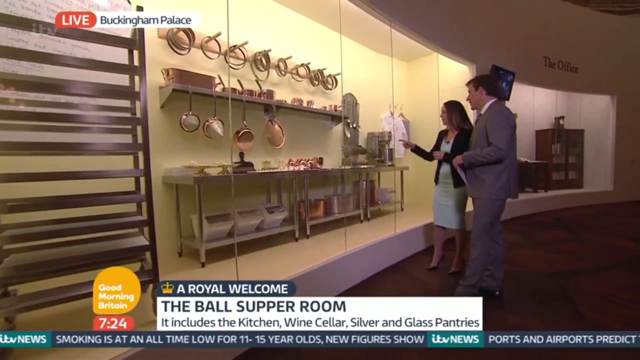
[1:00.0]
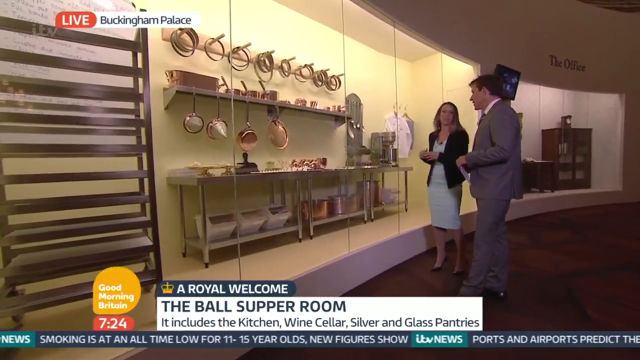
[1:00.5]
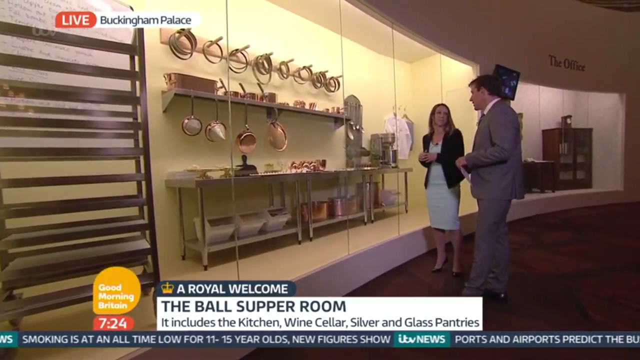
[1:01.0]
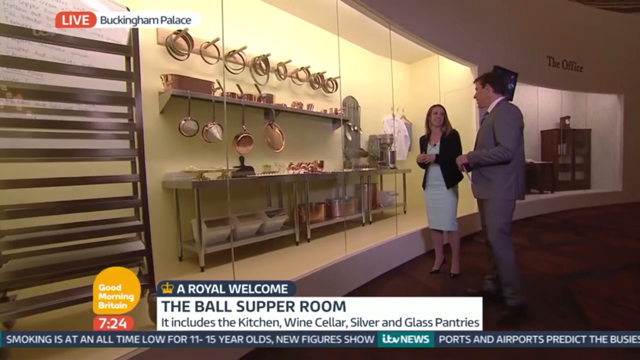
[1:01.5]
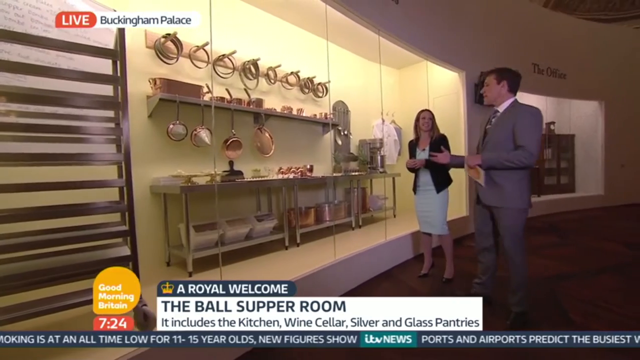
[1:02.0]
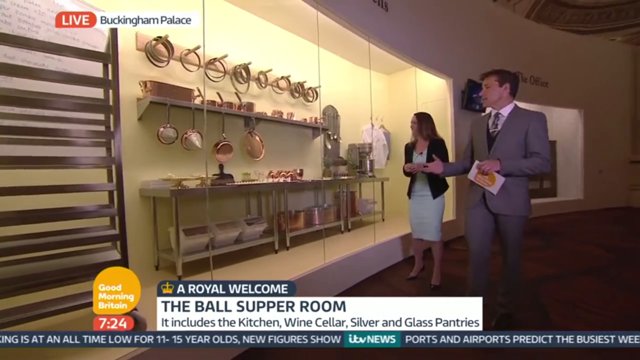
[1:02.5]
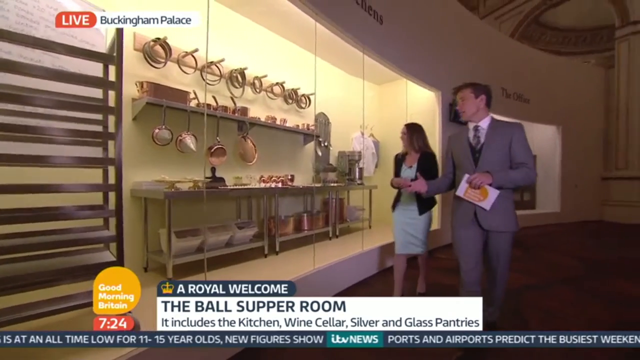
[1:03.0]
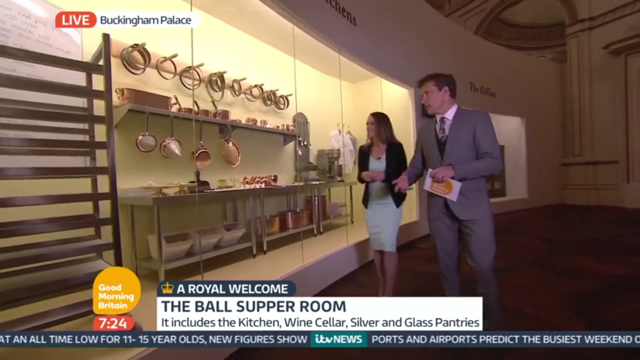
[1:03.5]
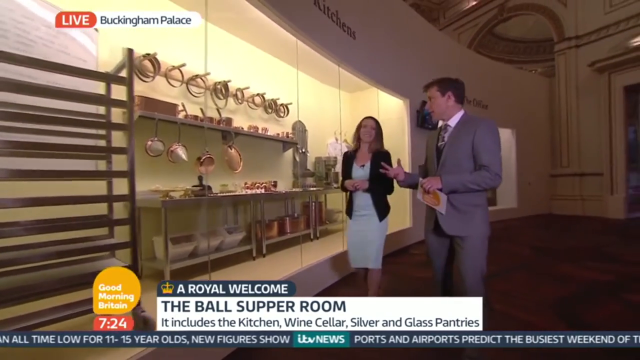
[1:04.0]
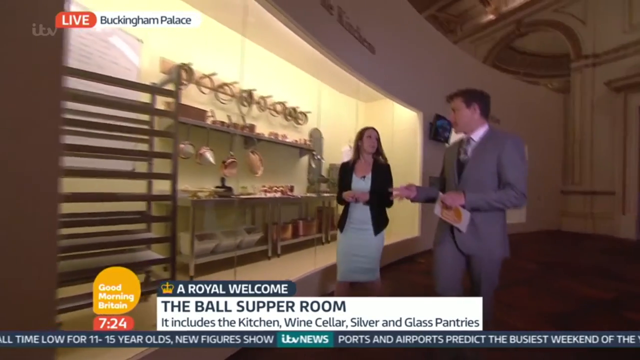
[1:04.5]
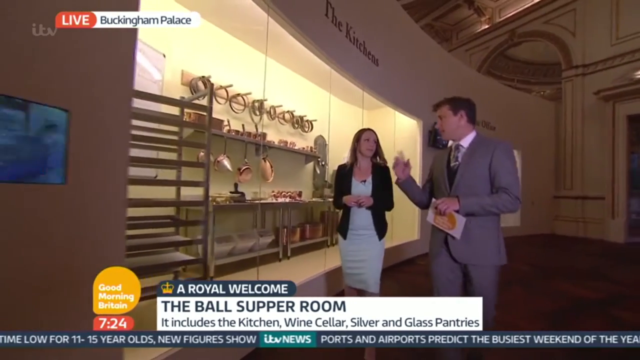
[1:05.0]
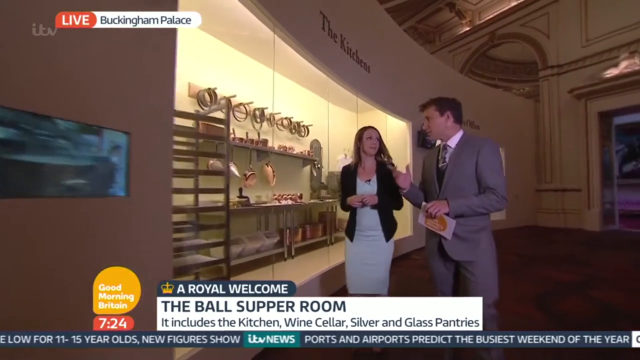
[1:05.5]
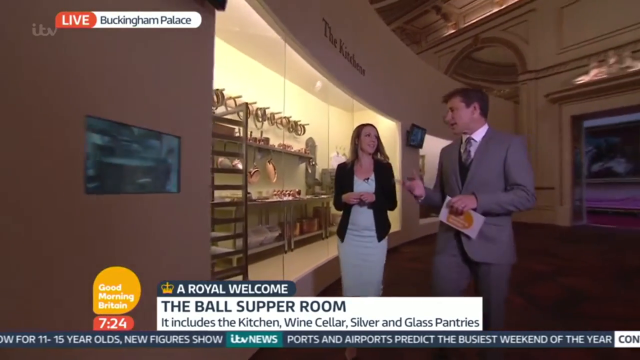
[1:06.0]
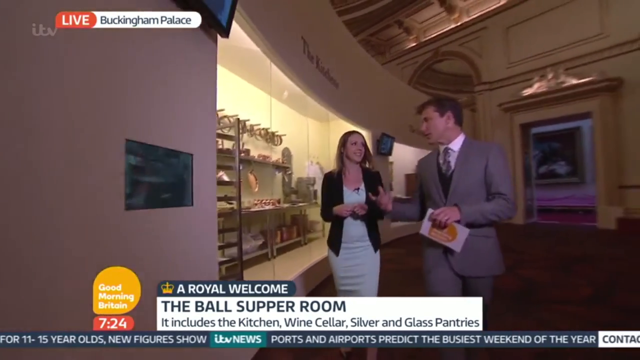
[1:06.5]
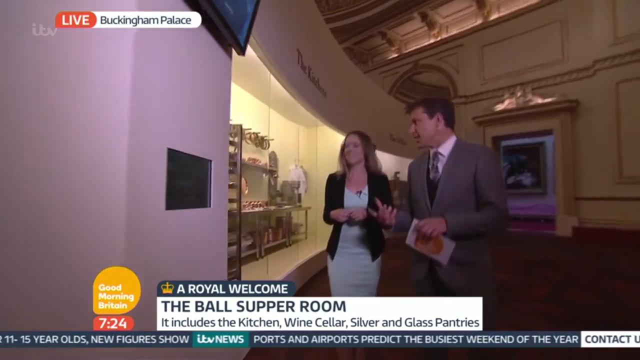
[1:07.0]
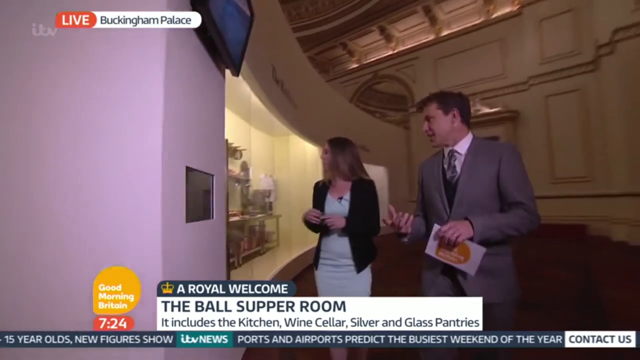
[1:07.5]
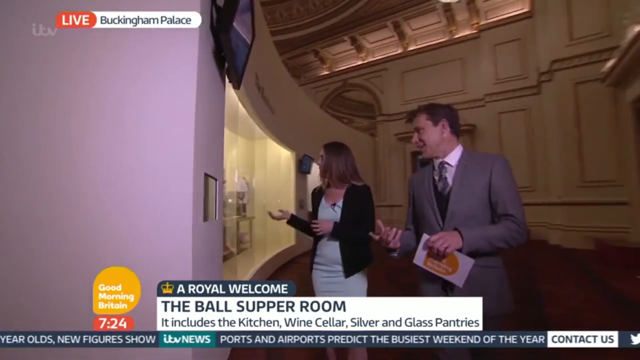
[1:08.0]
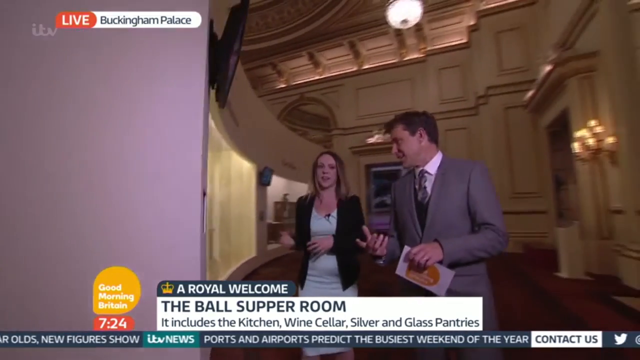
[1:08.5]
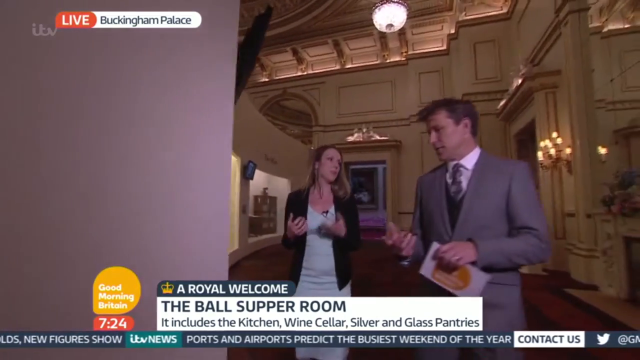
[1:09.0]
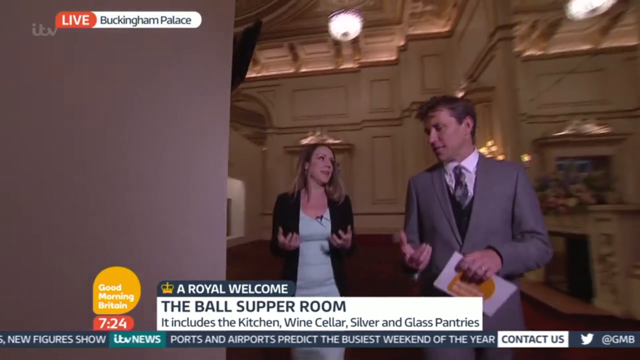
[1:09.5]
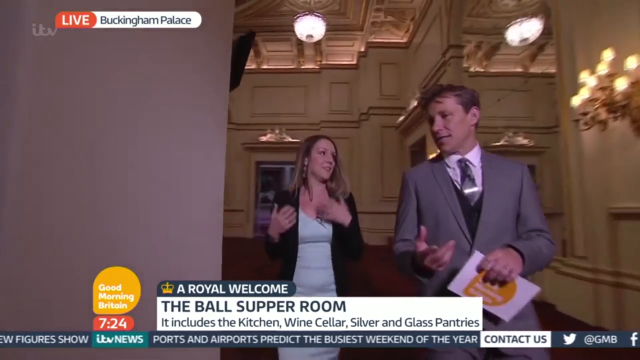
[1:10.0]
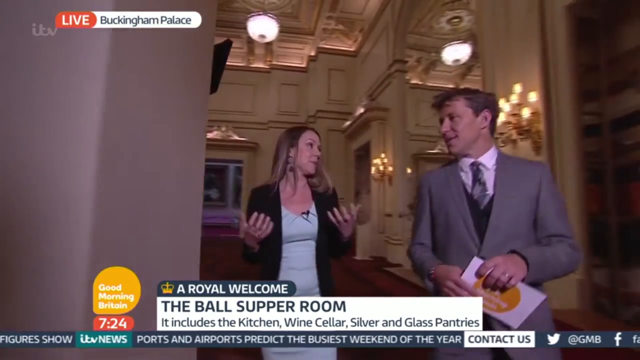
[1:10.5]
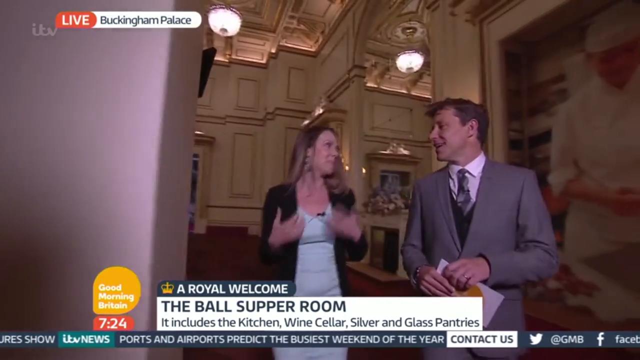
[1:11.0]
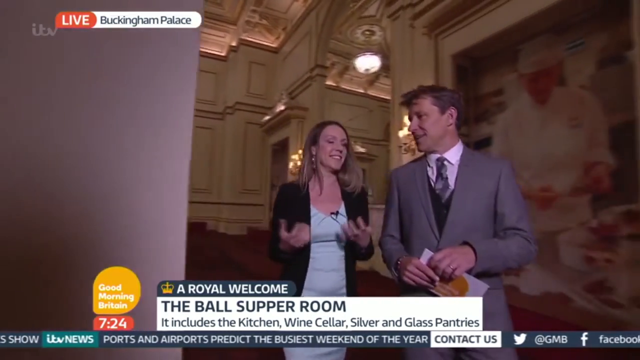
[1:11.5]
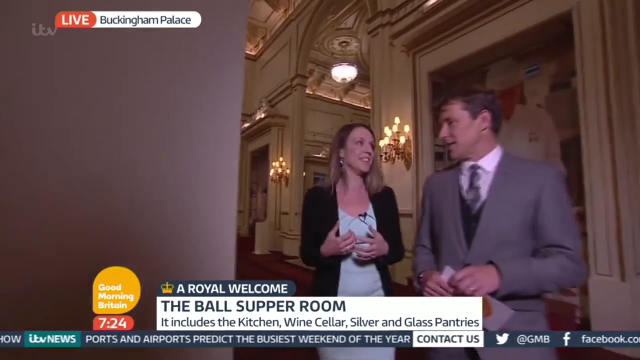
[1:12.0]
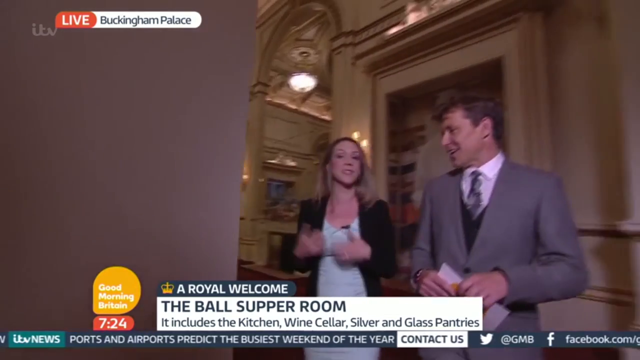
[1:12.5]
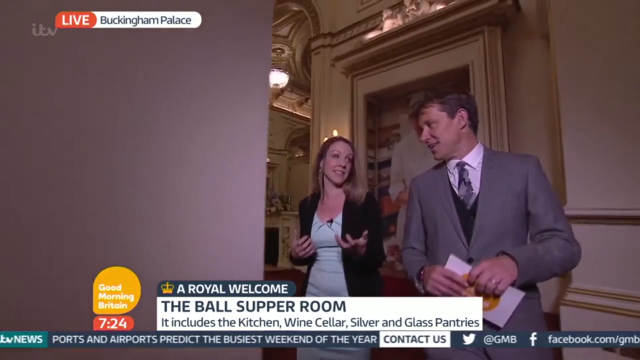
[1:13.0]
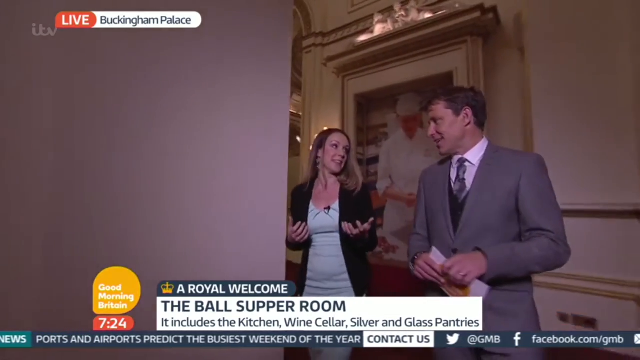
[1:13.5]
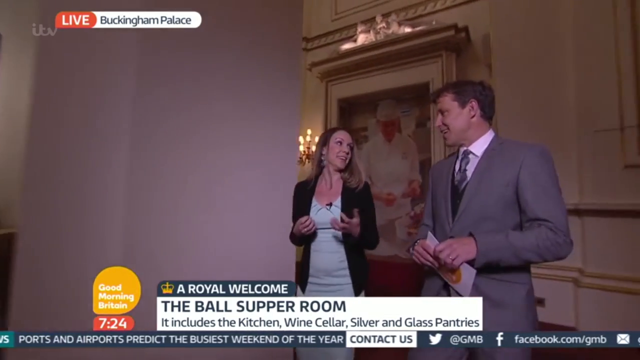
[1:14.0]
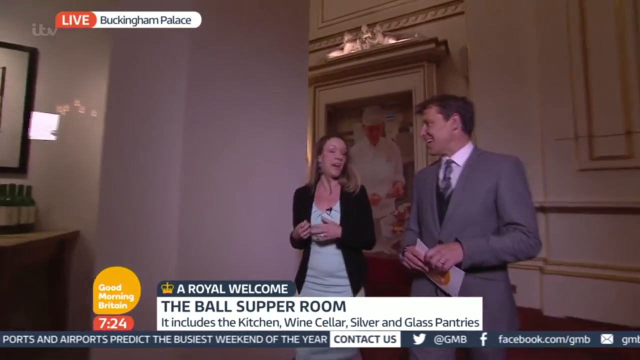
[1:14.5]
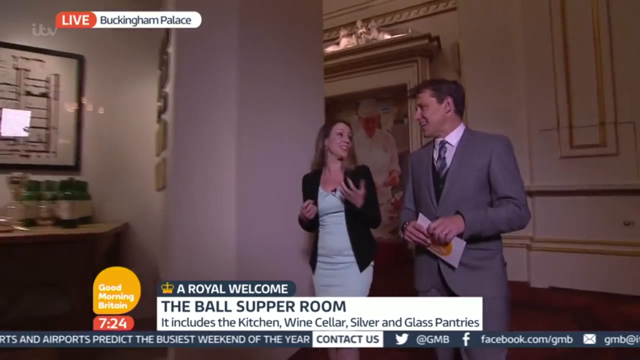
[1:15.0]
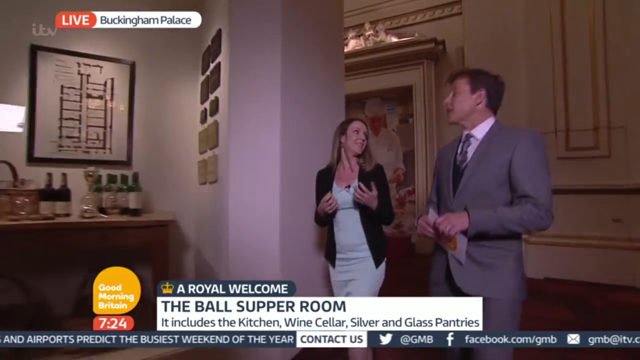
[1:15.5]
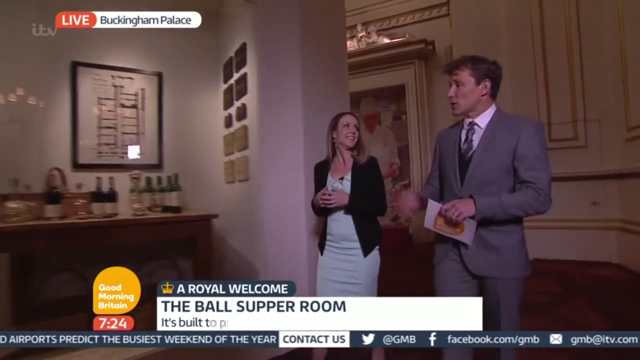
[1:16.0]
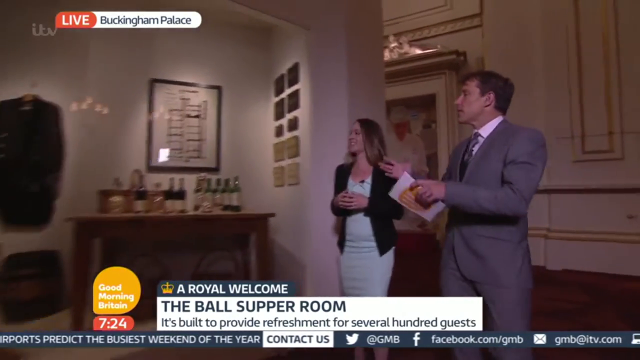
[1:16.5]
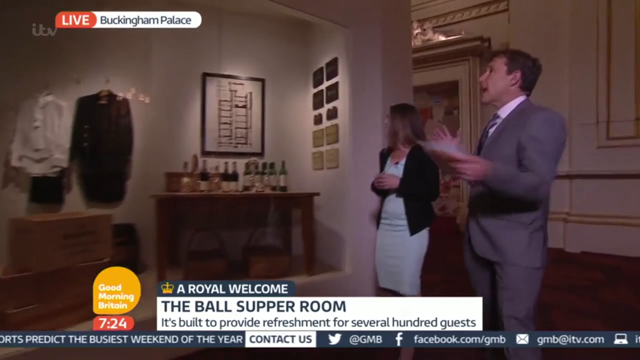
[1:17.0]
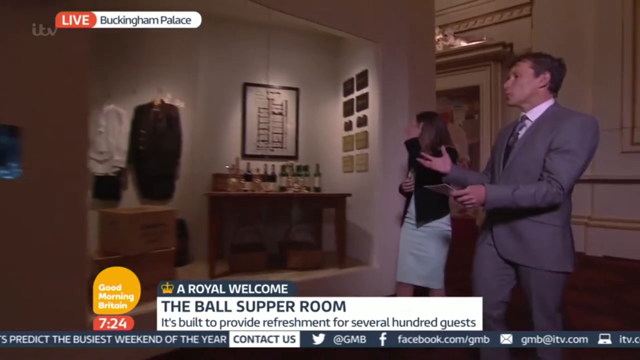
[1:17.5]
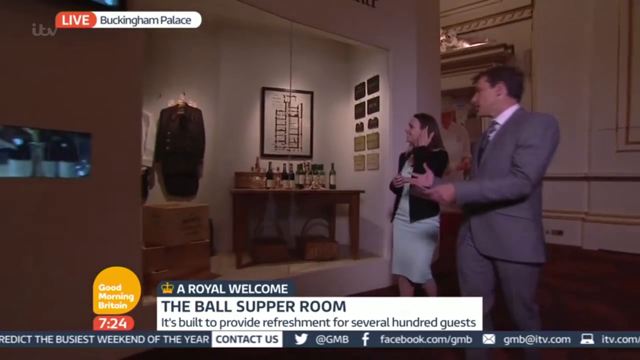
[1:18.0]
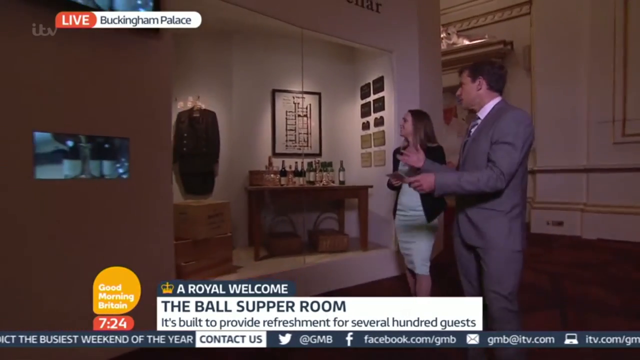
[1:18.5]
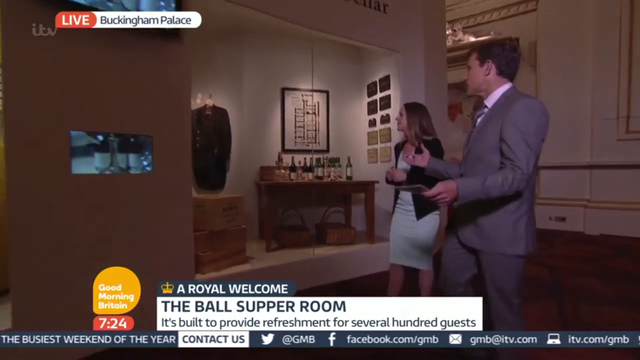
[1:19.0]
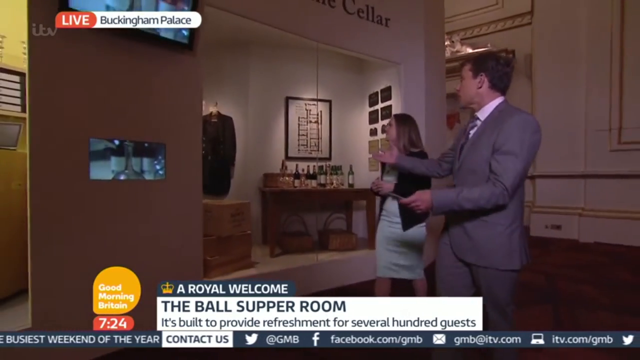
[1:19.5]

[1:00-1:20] In the lower left is an orange bubble with the words "Good Morning Britain", and below it a red bubble with the time "7:24". To the right a white rectangle reads "The Ball Supper Room" with, below it, "It includes the kitchen, wine cellar, silver, and glass pantries". At the top of the white rectangle is a blue rectangle about half its size, with a crown drawn in yellow on the left and "A Royal Welcome" to the right. In the top left, a curved rectangle reads "Live Buckingham Palace", with "Buckingham Palace" on a white background and "Live" on a red background. The kitchen exhibit shows a long metal table with pots and pans on a shelf beneath it and different saucers and mixers on it; above is a shelf on the wall with four pans hanging off it, and at the top of the wall a row of metal pegs with circular metal rings around each. In front of the exhibit, the man on the right, in a gray suit and white shirt, holds a white card with both hands in front of his body; to his left the woman, in a white dress with a black coat over it, clasps her hands in front of her stomach. They talk to each other, then walk forward toward the camera, to the left side of the exhibit and past it. As they walk, the woman looks behind and gestures with her hands toward the kitchen exhibit being left behind, while the man holds his card in his left hand and gestures with his right hand, palm facing the ceiling and fingers slightly curled inward. They walk through an ornate building with light fixtures that each hold several candles; it looks like they are inside a palace. As they turn a corner, a large painting is visible that appears to be of a chef in a white chef's jacket. The man and woman continue walking forward, talking and looking at each other, until they reach another exhibit.